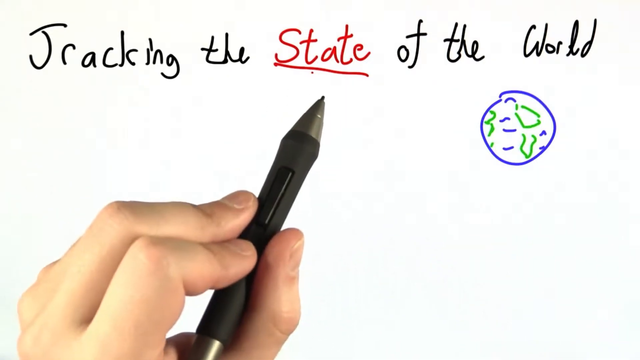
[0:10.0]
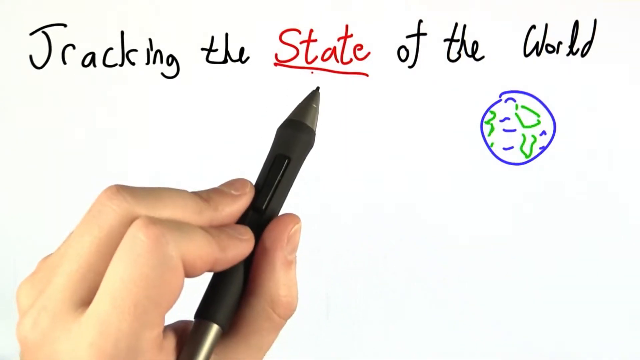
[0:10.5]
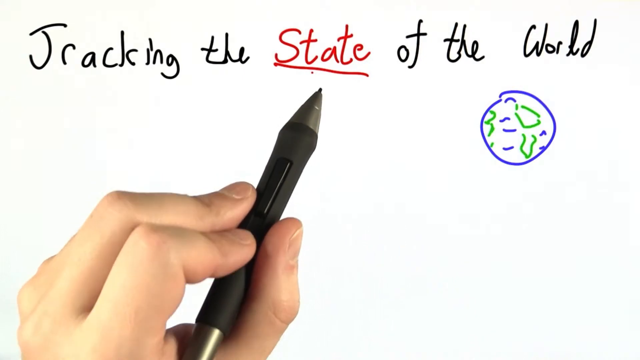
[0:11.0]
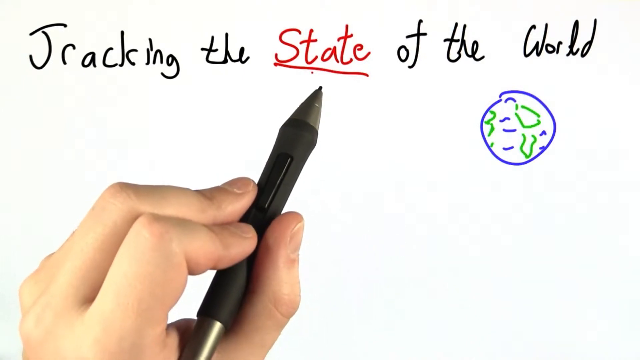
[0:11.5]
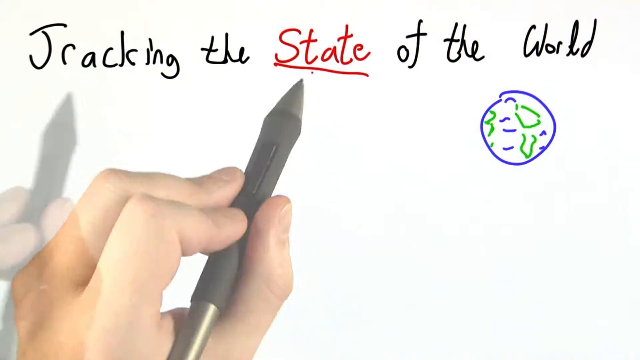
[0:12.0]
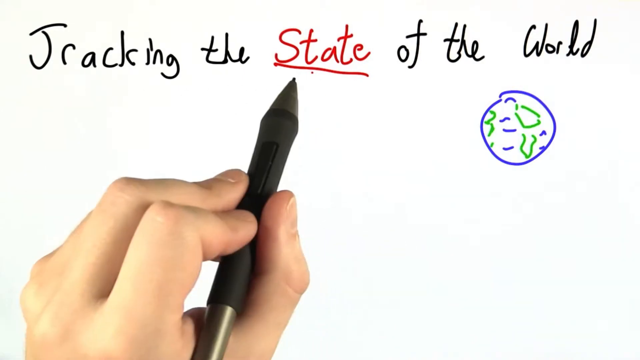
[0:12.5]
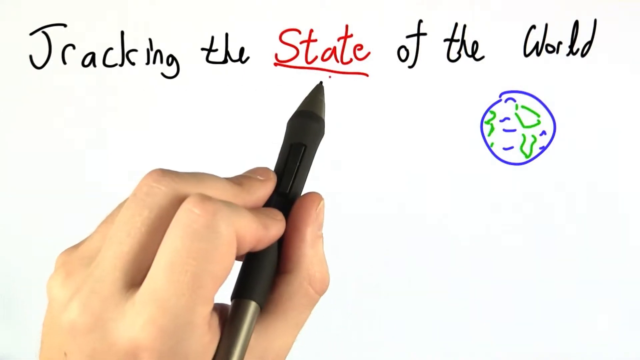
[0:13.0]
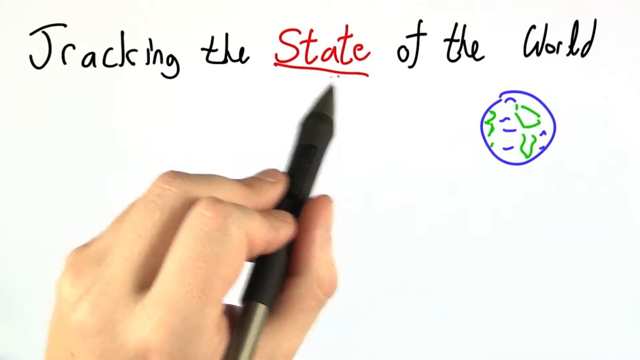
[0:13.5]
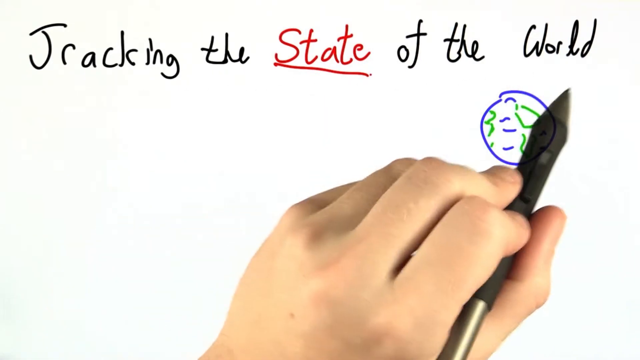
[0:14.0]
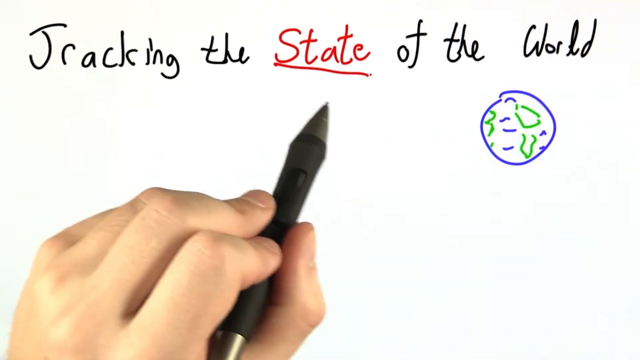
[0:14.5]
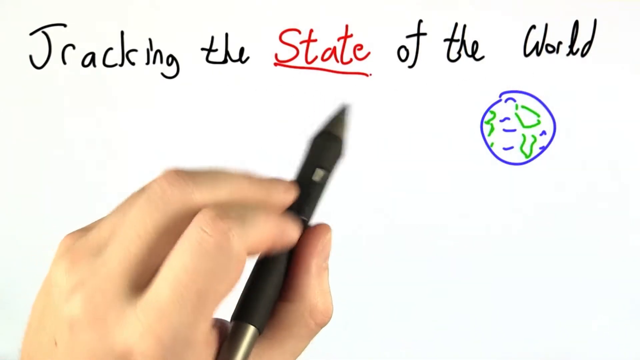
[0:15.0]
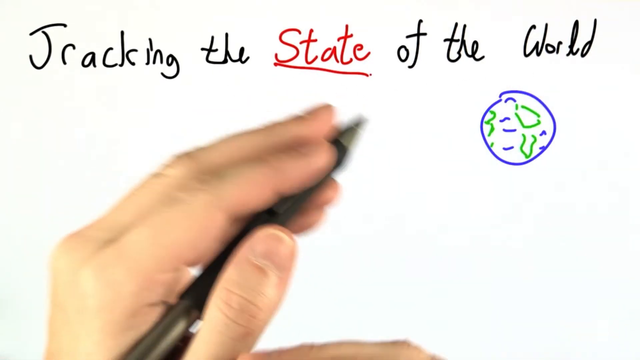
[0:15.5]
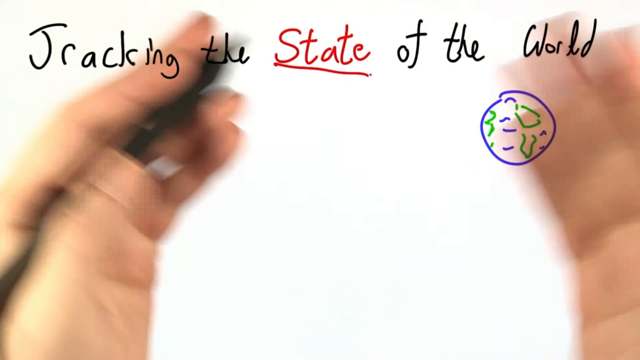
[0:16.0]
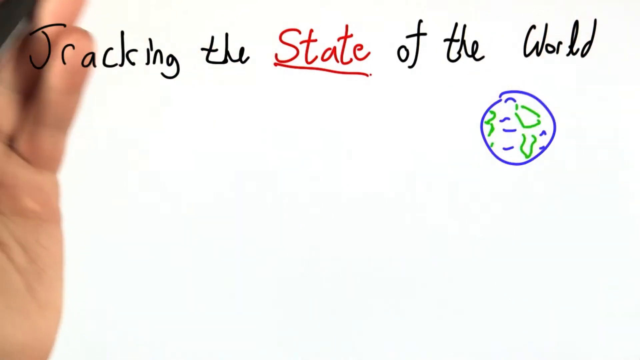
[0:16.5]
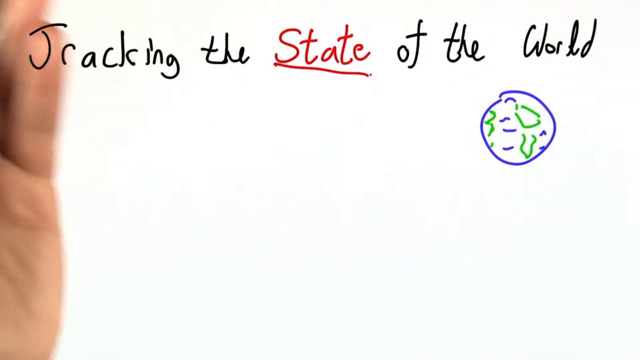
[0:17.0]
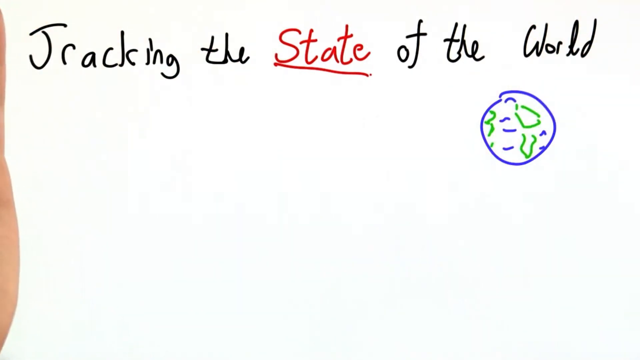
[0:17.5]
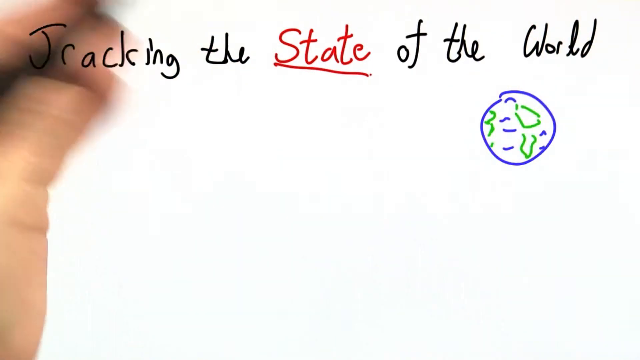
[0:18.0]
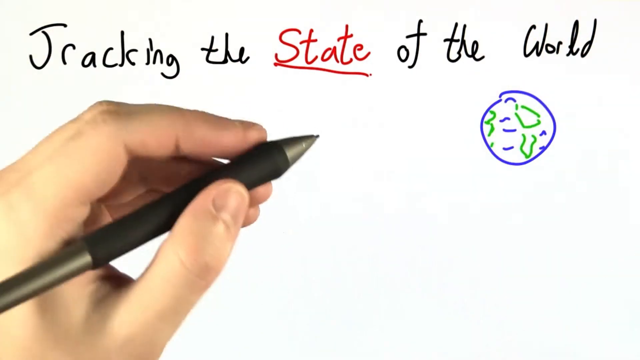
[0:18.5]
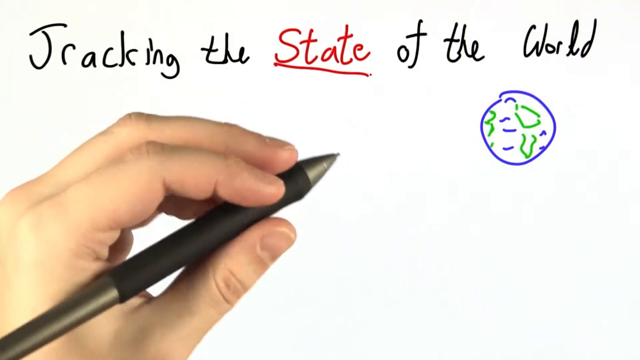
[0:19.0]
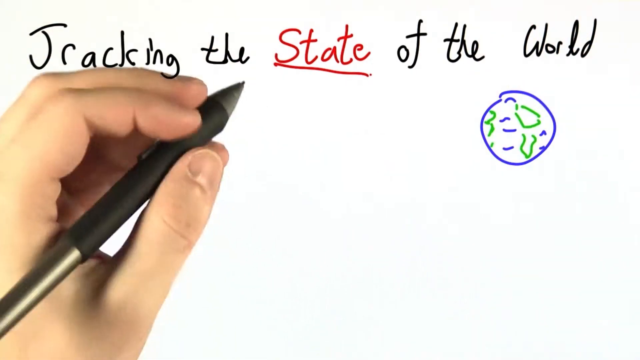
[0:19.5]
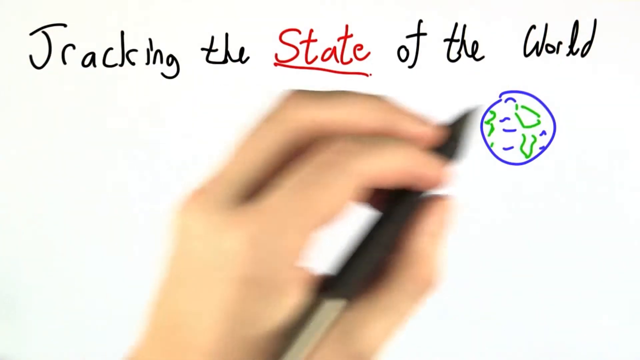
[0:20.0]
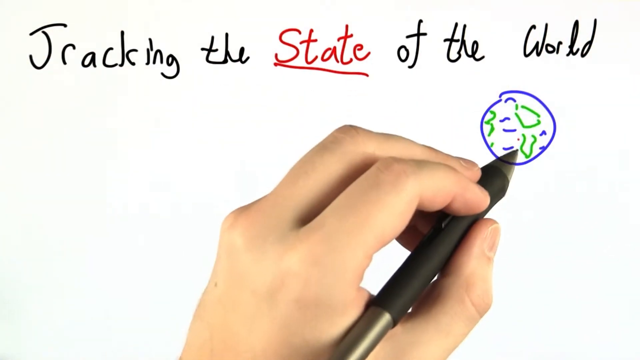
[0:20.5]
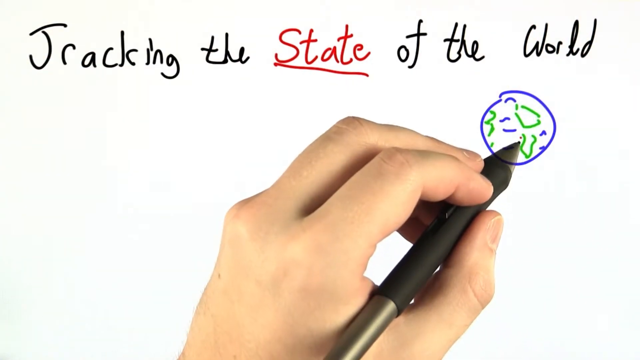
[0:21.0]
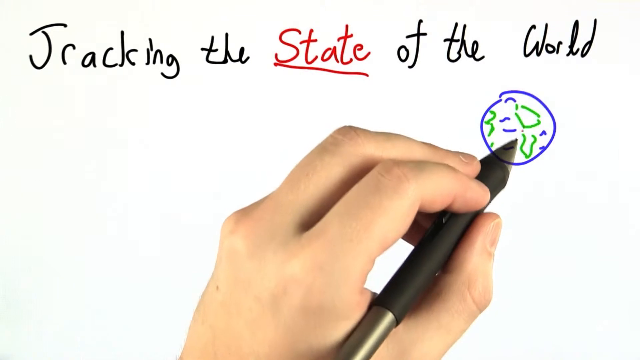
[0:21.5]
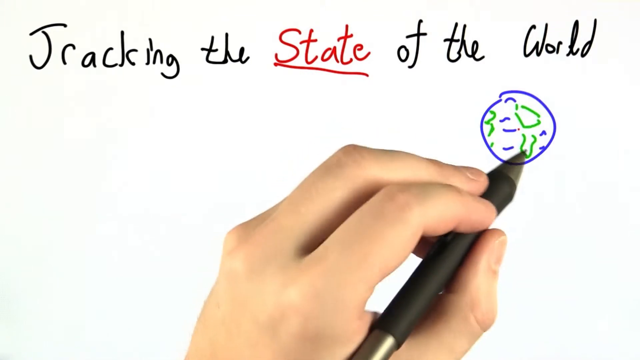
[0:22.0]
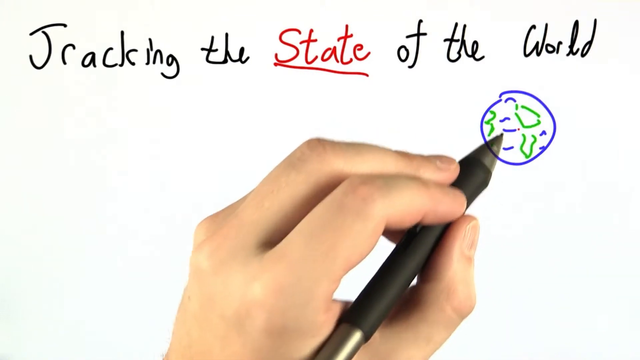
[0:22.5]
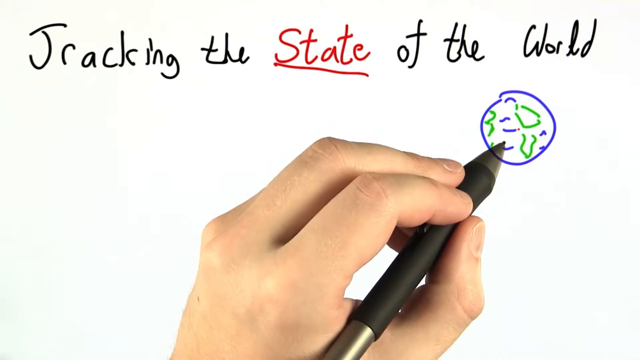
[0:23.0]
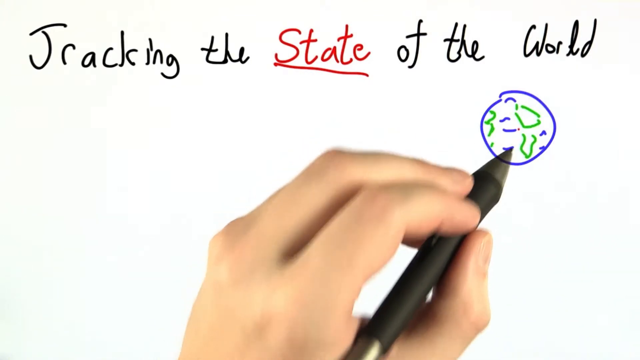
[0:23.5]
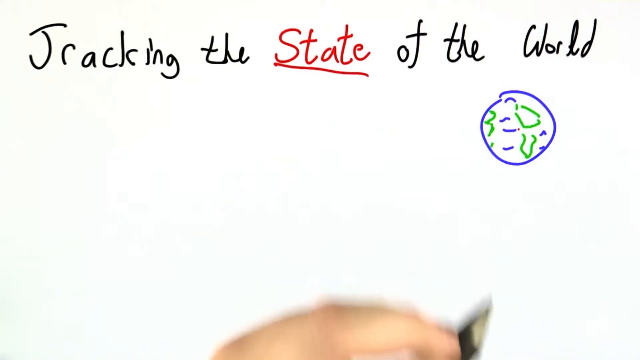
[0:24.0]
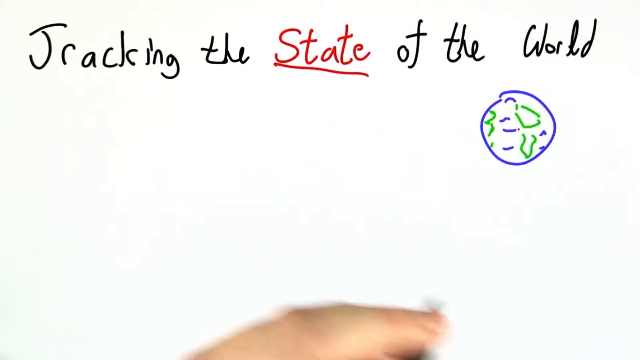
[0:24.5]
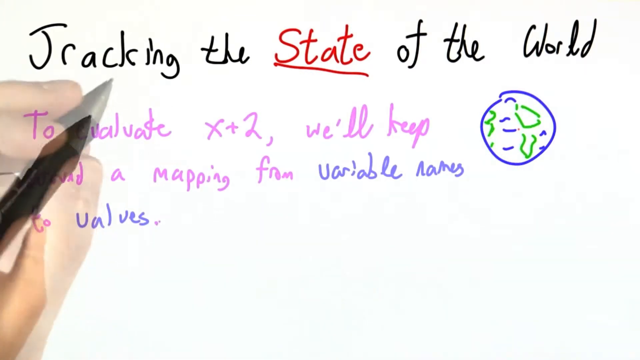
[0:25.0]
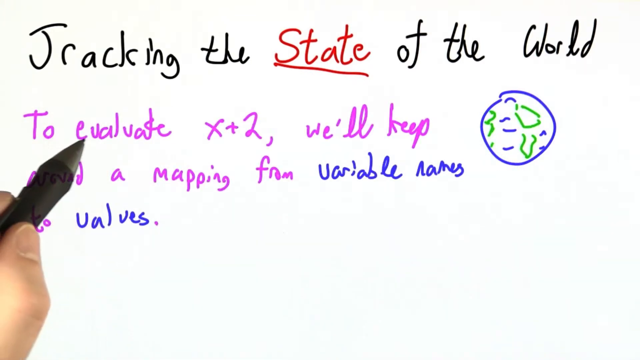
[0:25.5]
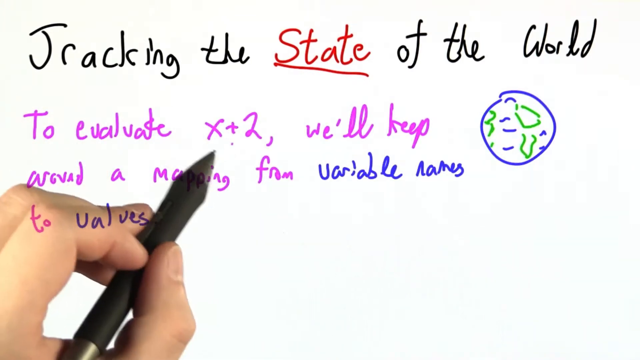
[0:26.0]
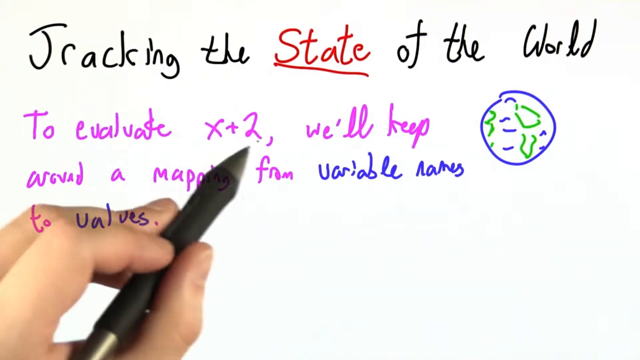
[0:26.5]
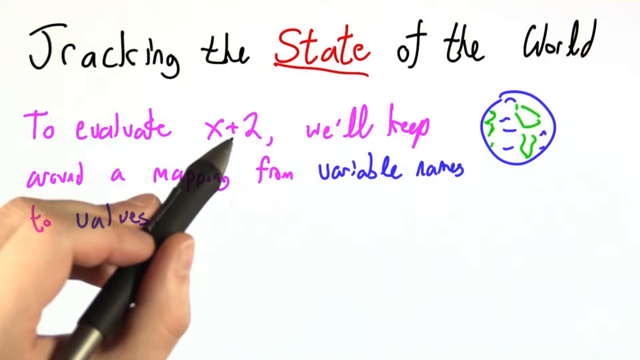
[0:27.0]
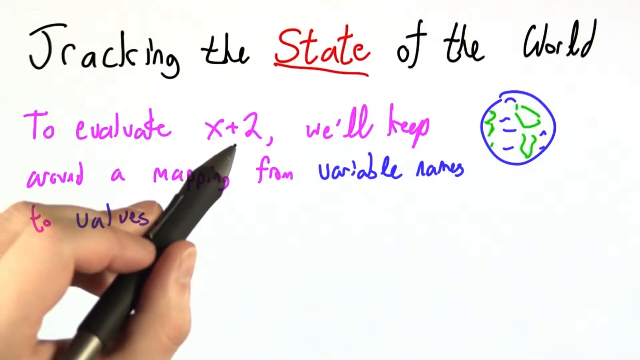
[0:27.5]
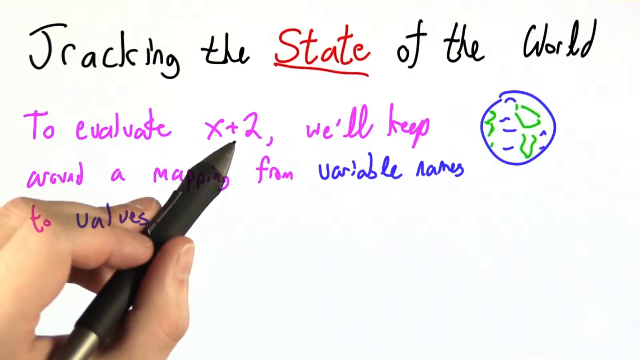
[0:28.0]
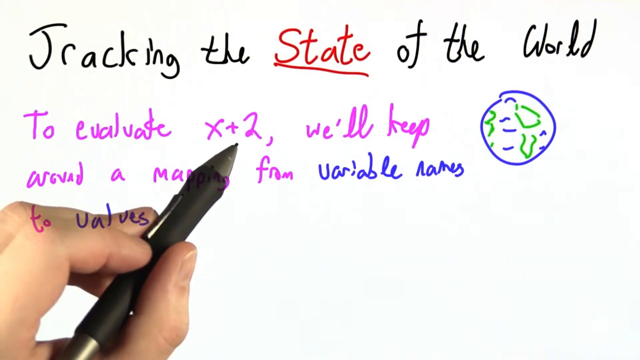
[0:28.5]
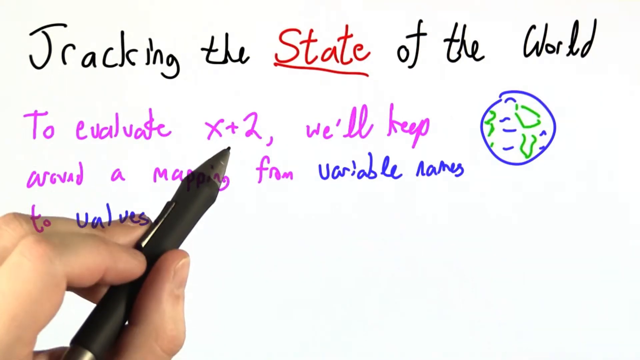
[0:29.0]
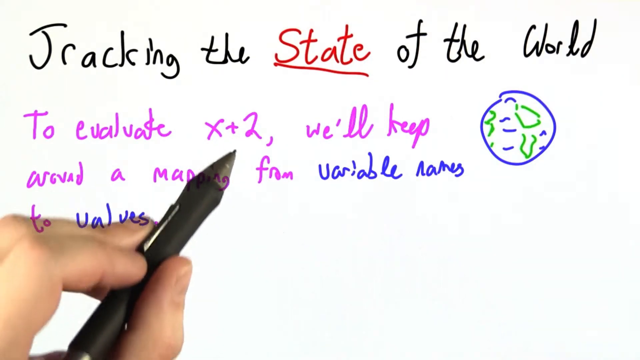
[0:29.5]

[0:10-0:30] The person writing on the touchscreen uses both hands, and it is not visible whether they are a man or a woman. They gesticulate a lot around the sentence "tracking the state of the world", use the pen to point first to the word "state" and then to the earth drawing for a few seconds. More handwritten text then appears, reading "to evaluate x plus two we'll keep around a mapping from variable names to values". Part of the text is in a very bright purple ink, while the words "variable names" and "values" are in a distinct blue. The person keeps moving the pen around, pointing to different parts of the text.